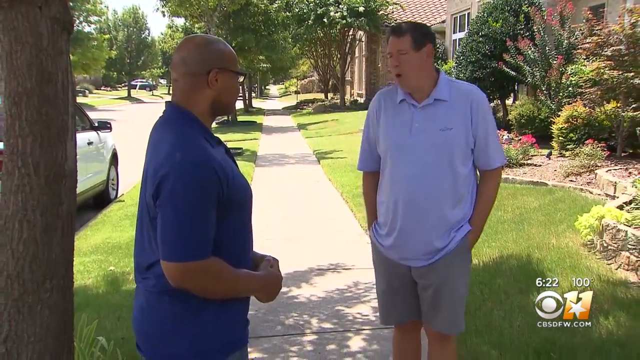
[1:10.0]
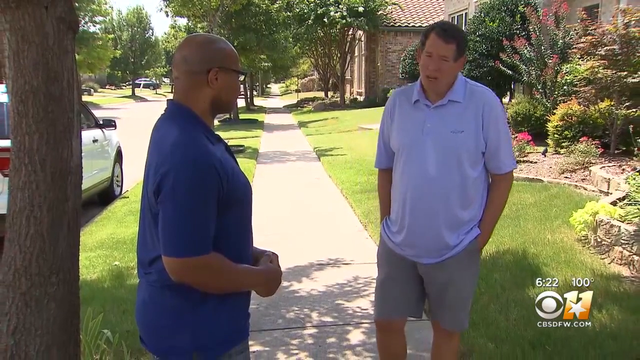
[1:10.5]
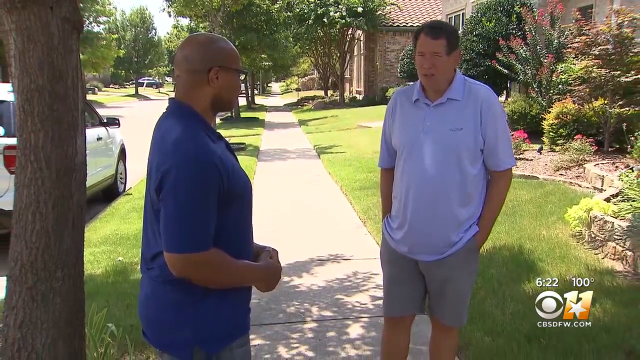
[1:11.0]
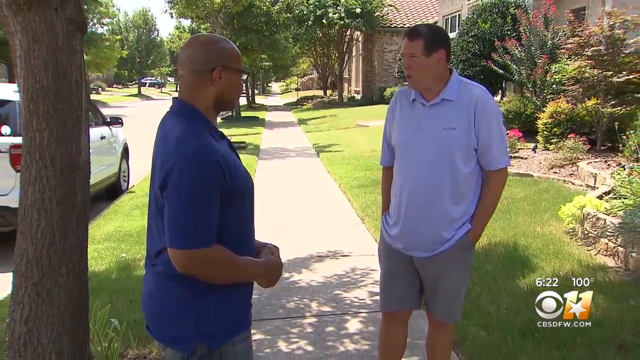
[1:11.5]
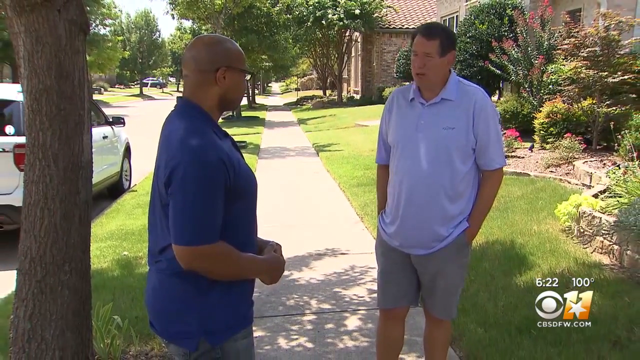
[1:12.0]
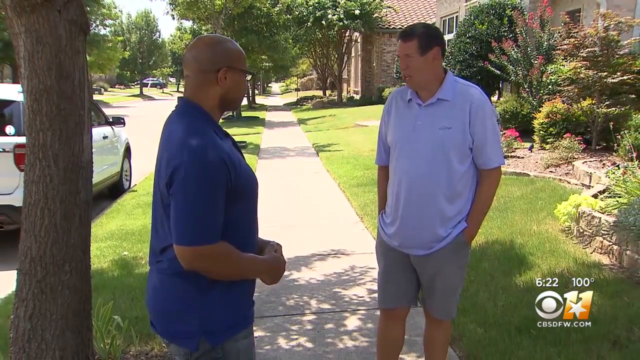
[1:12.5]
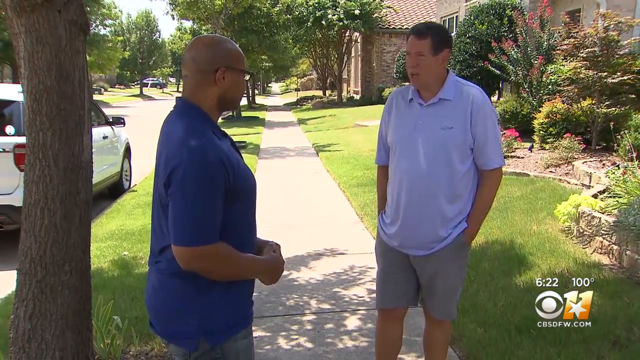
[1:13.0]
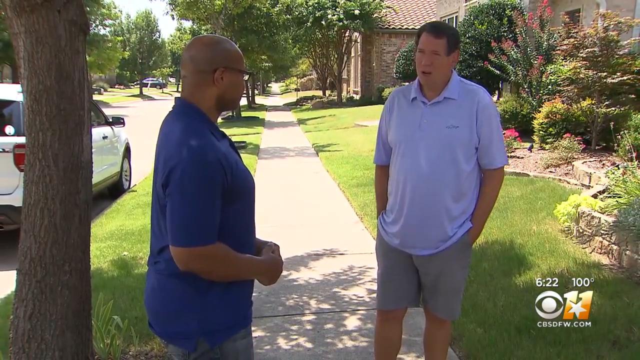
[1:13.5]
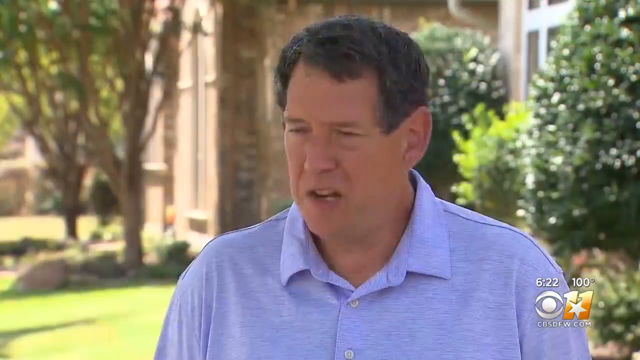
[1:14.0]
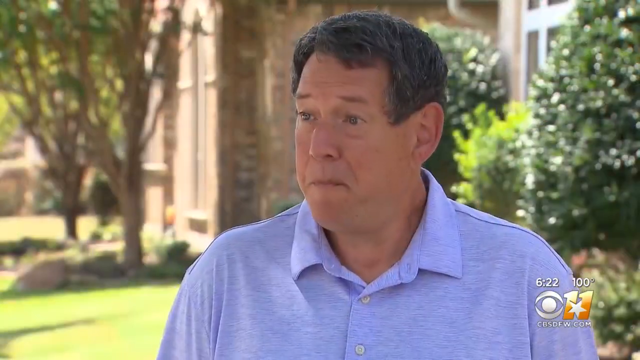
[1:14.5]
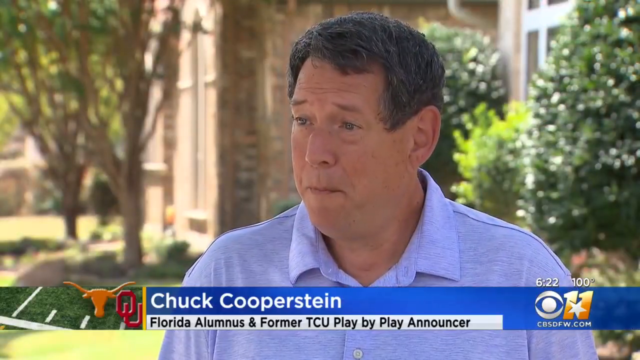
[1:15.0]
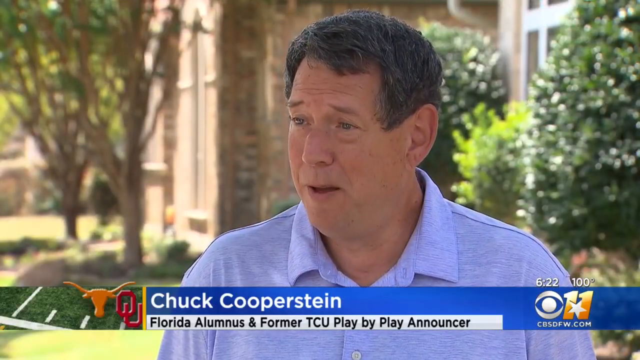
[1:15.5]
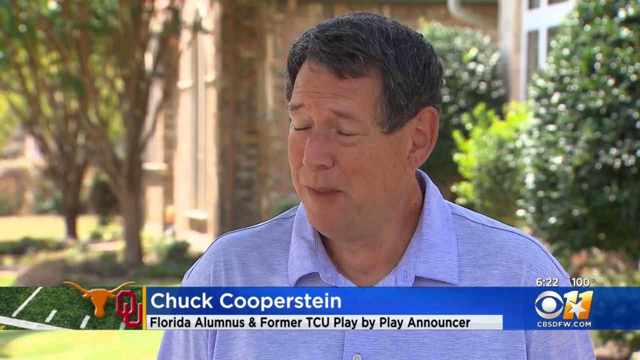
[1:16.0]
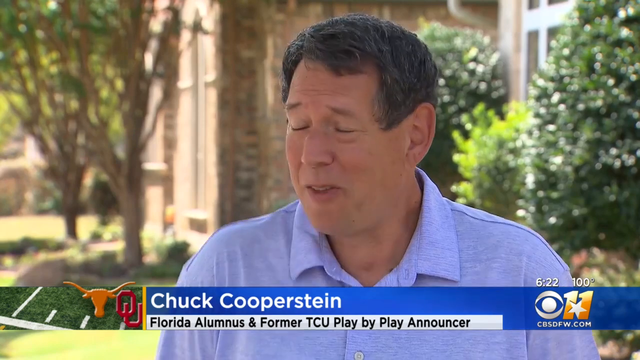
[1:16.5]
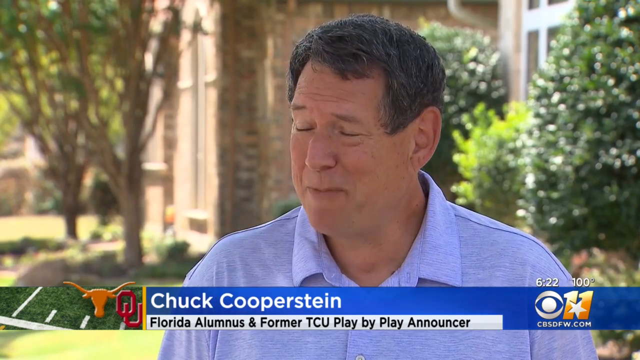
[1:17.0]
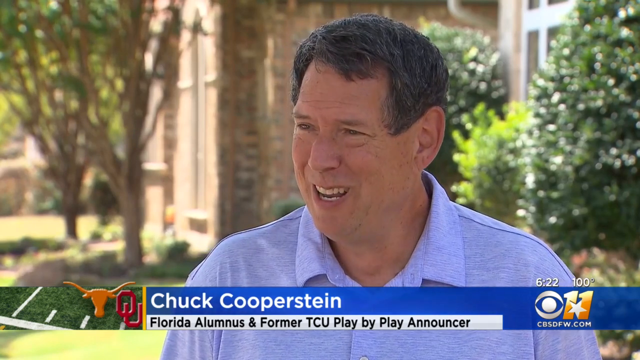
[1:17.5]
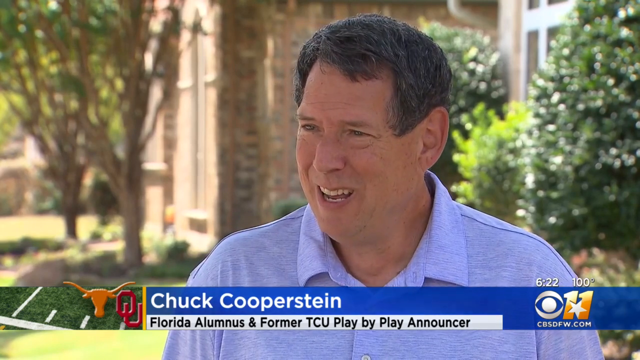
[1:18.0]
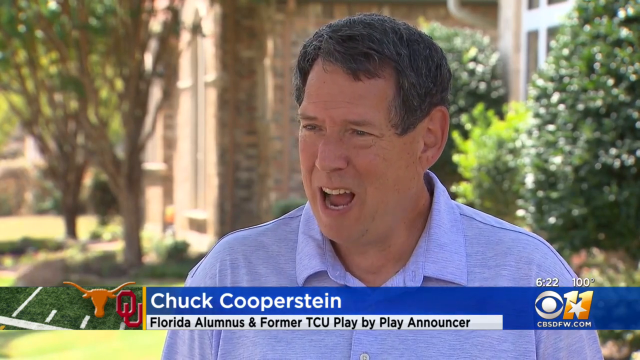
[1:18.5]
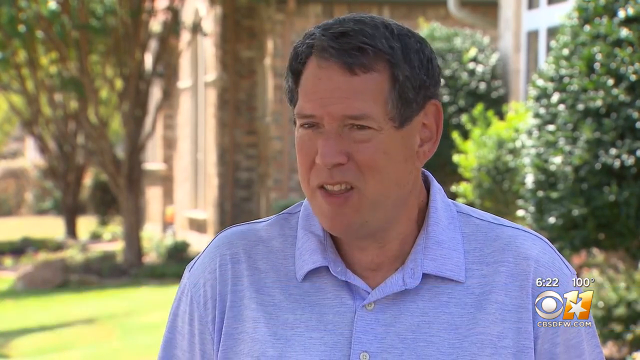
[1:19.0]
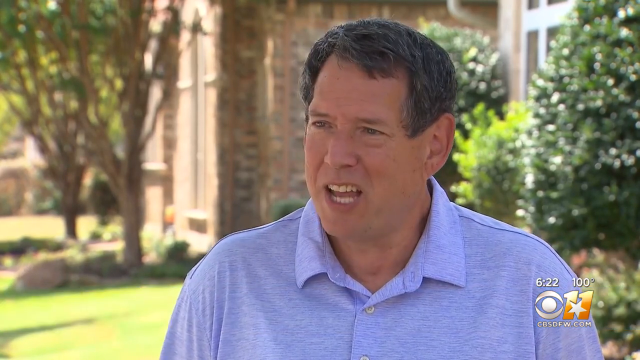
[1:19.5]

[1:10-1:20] The interview with the man on the sidewalk in the residential area continues. The camera pans out, and then there is a close-up of the man being interviewed, Chuck Cooperstein, a Florida alumnus and former TCU play-by-play announcer. He has his eyes closed as he talks and then opens them, and he seems a bit more frustrated this time. He wears a blue polo shirt, and it is a very sunny day. The reporter wears glasses and listens intently. A car in the background is not moving, and the scene is calm.